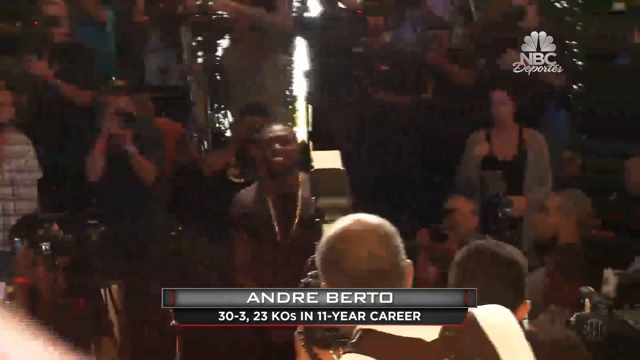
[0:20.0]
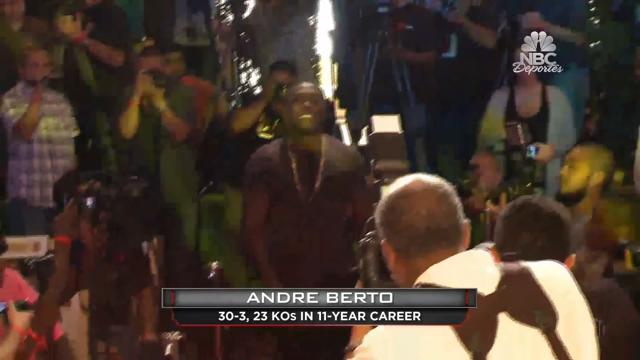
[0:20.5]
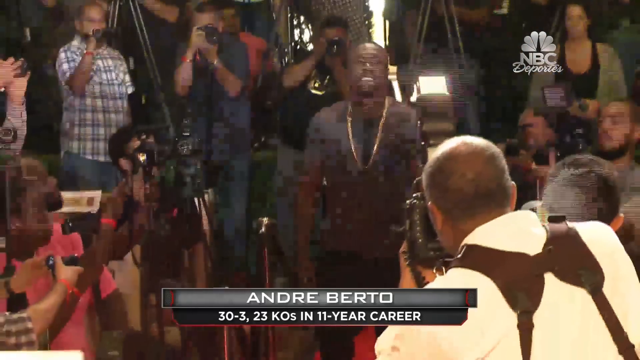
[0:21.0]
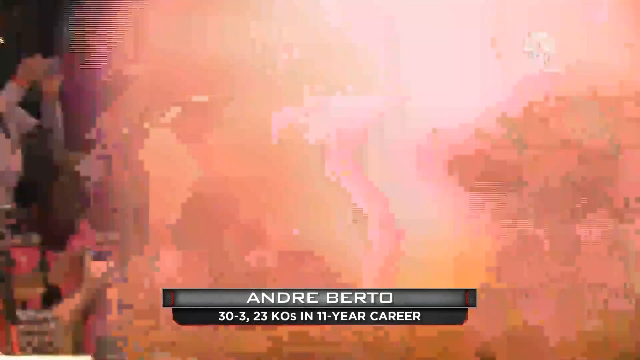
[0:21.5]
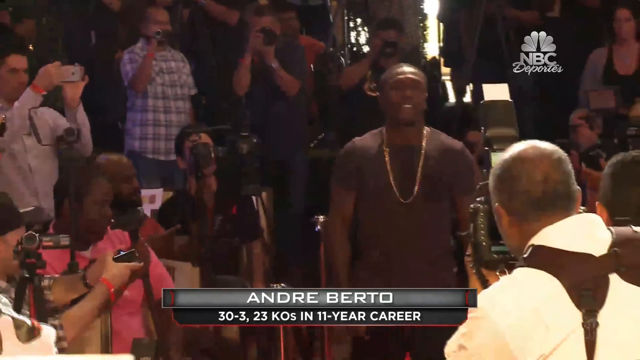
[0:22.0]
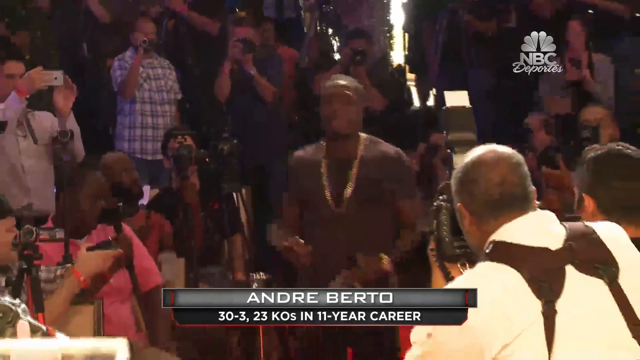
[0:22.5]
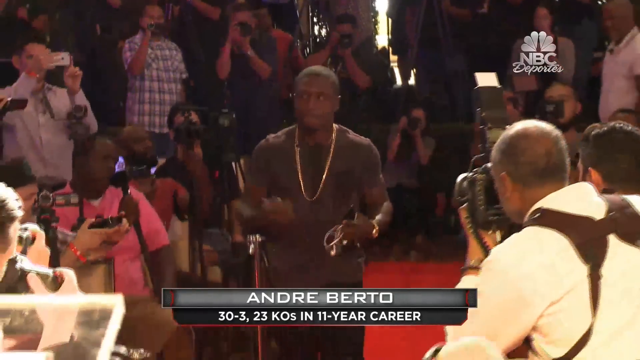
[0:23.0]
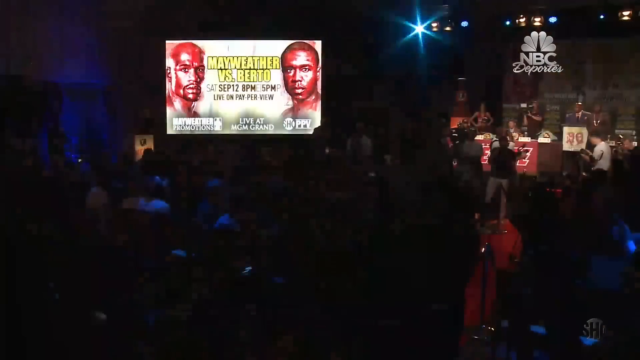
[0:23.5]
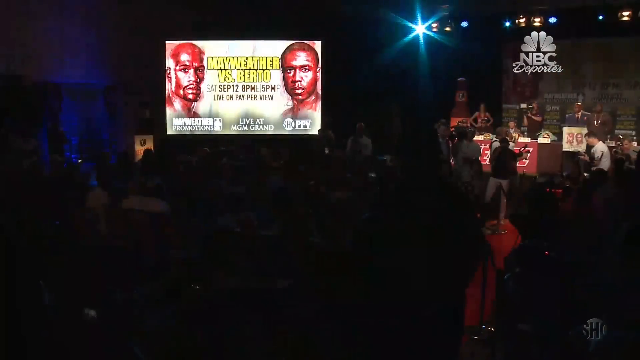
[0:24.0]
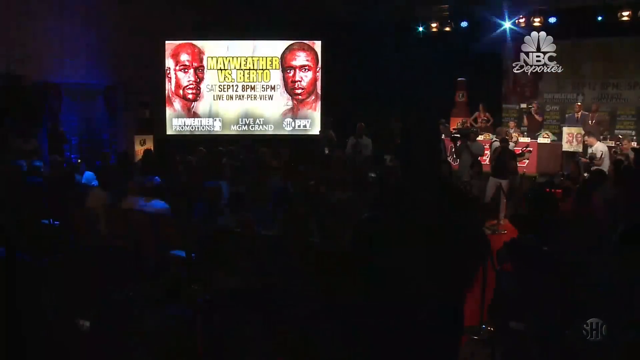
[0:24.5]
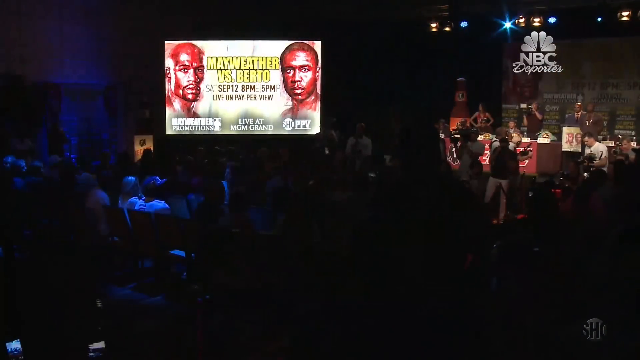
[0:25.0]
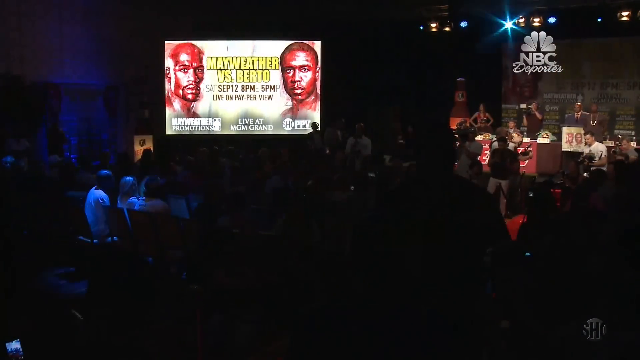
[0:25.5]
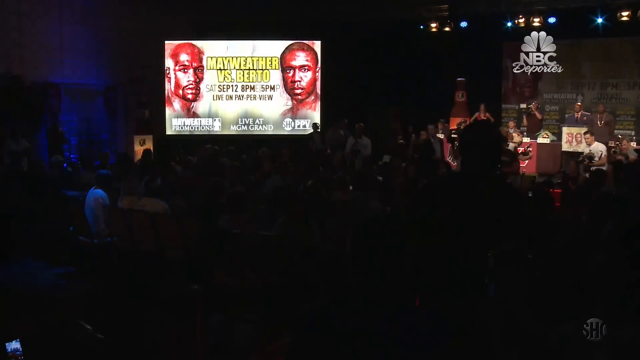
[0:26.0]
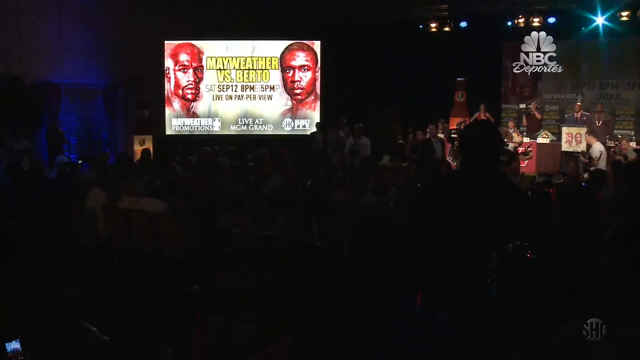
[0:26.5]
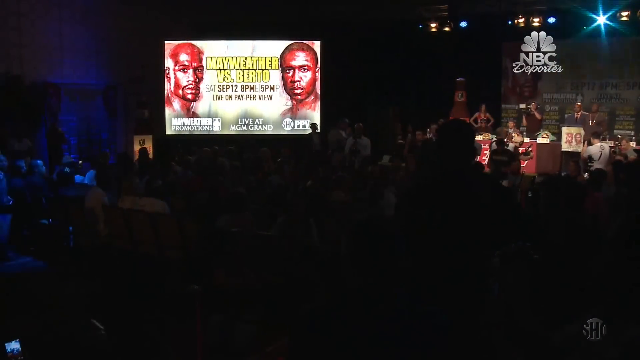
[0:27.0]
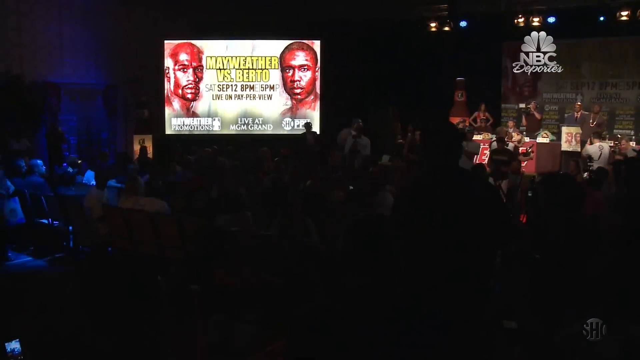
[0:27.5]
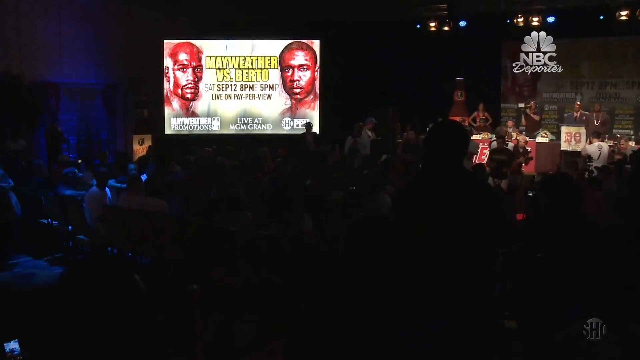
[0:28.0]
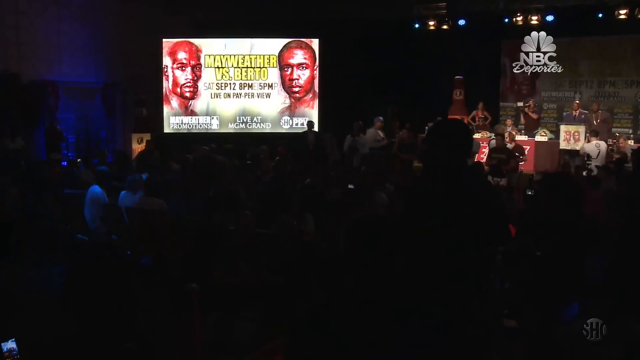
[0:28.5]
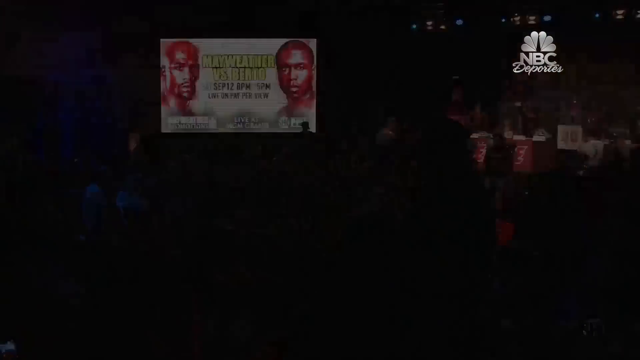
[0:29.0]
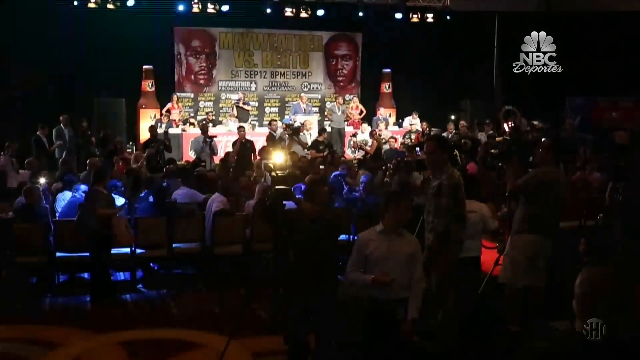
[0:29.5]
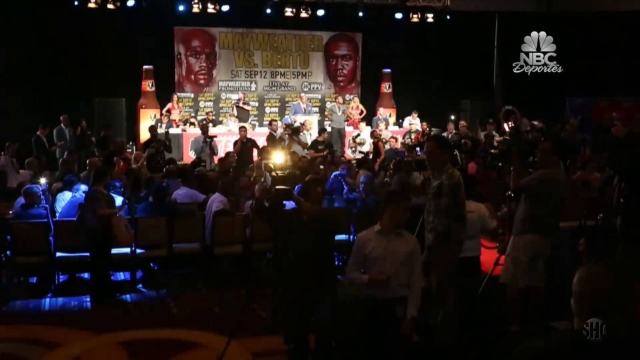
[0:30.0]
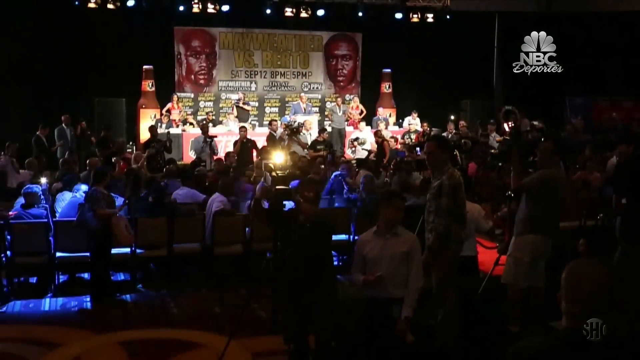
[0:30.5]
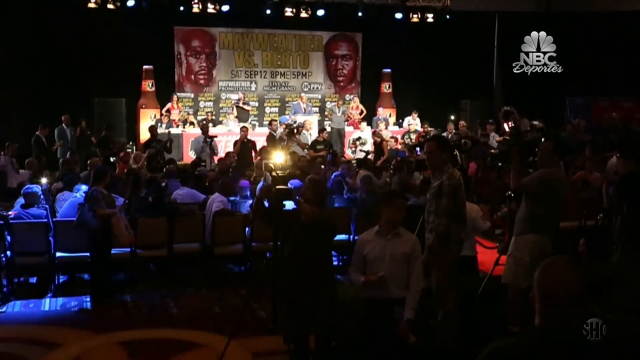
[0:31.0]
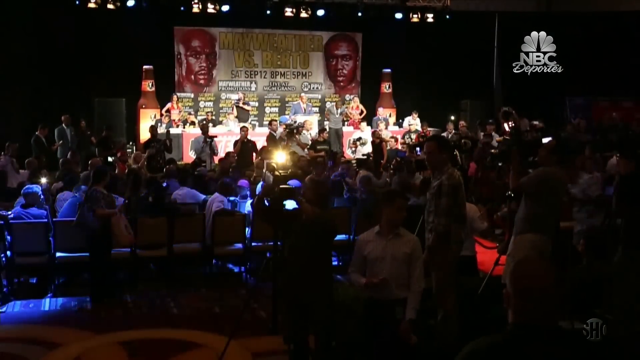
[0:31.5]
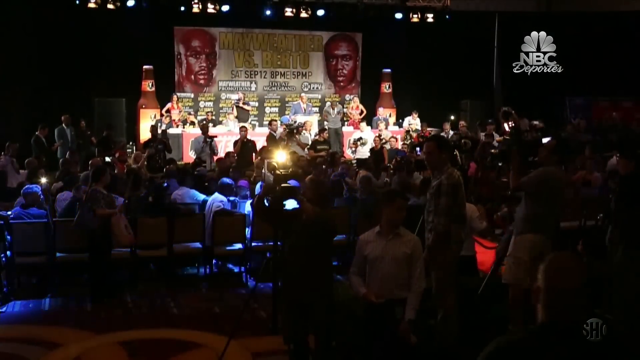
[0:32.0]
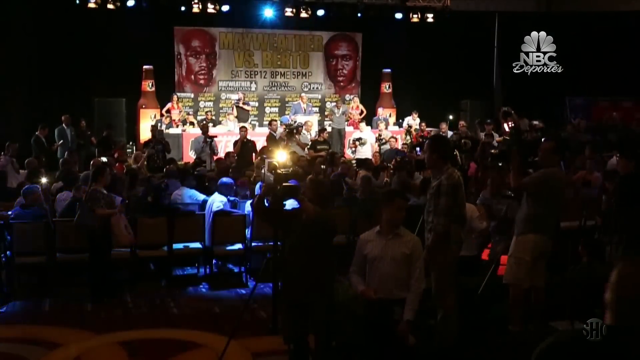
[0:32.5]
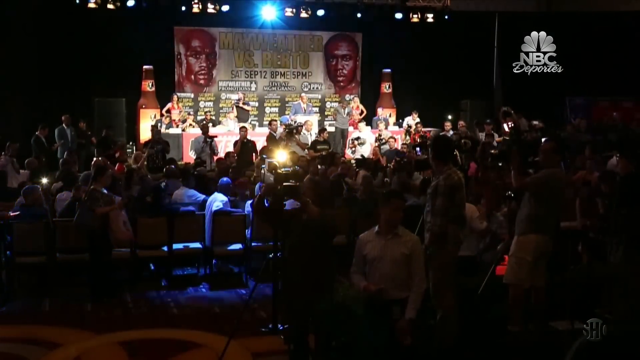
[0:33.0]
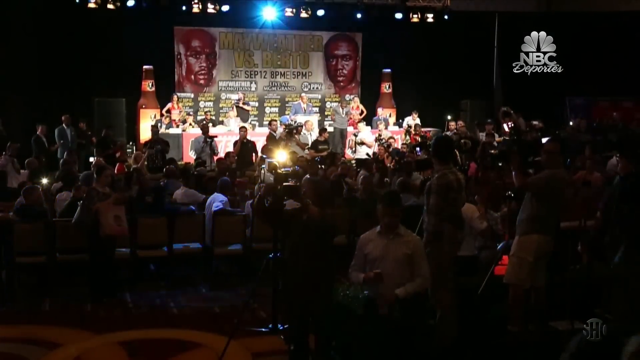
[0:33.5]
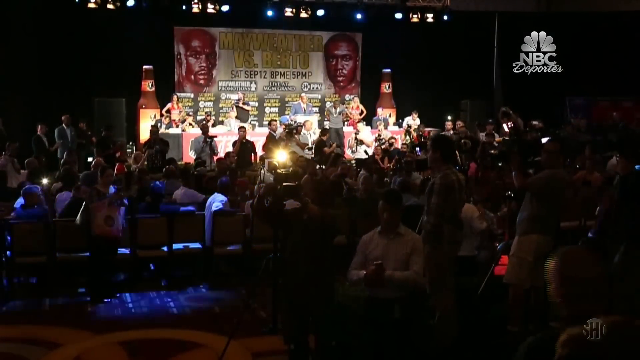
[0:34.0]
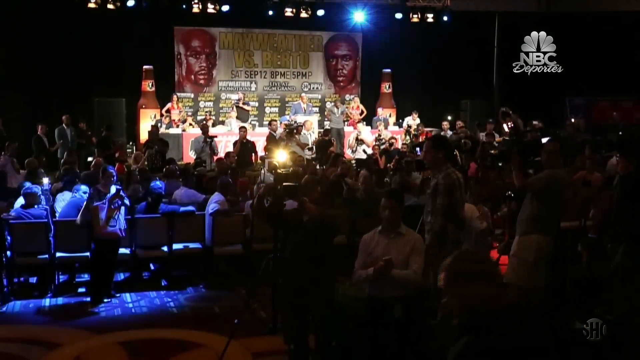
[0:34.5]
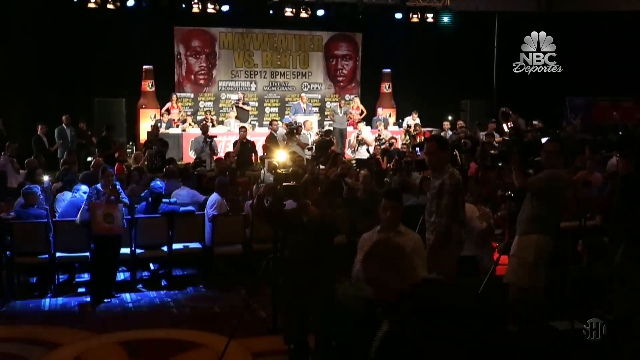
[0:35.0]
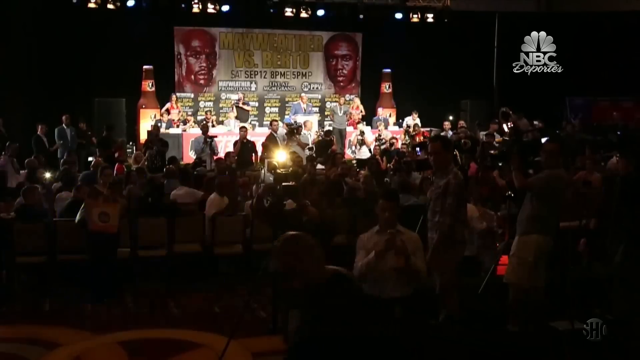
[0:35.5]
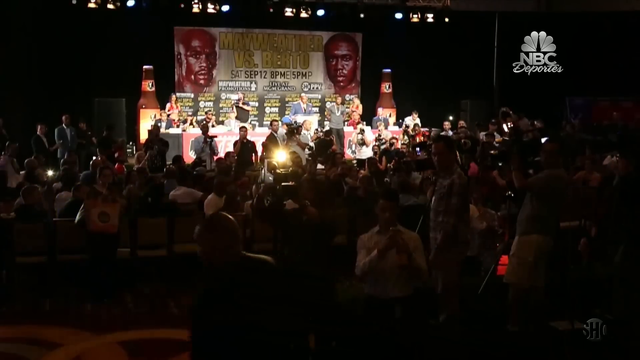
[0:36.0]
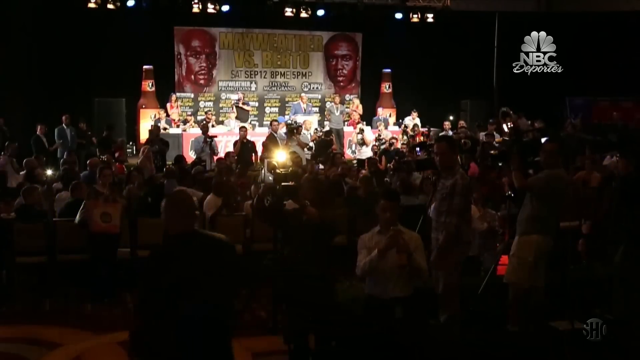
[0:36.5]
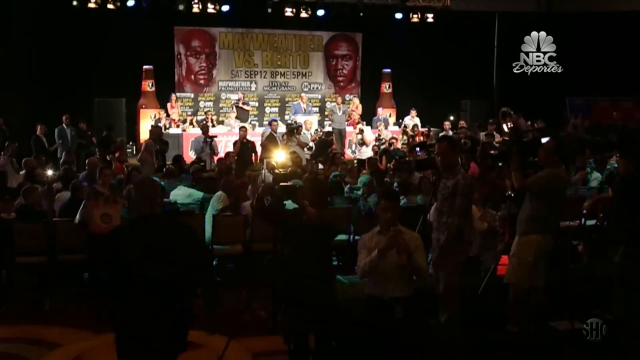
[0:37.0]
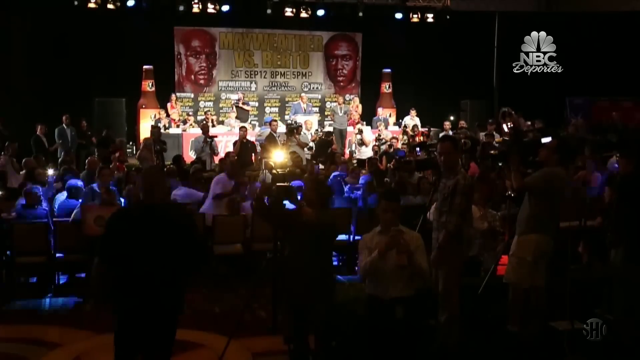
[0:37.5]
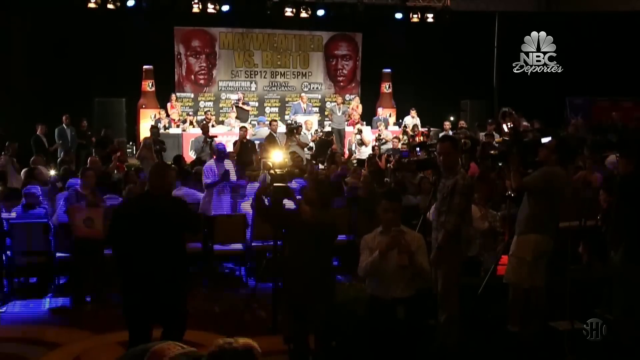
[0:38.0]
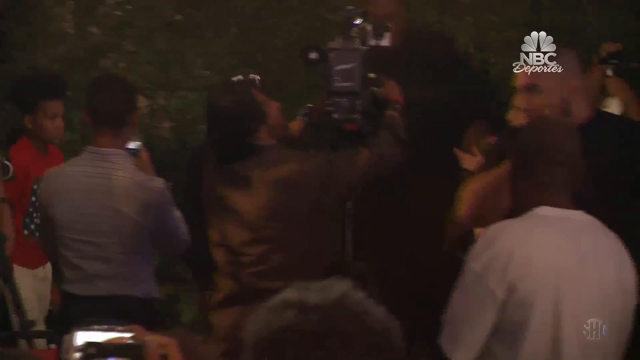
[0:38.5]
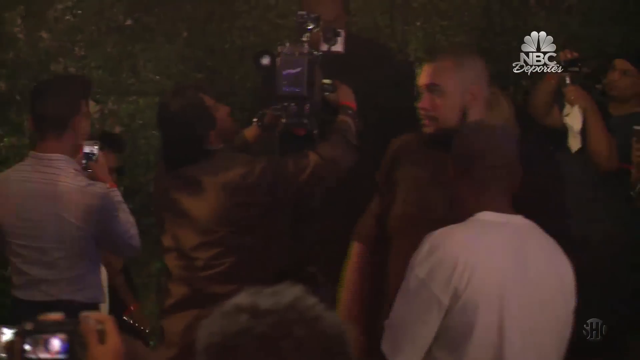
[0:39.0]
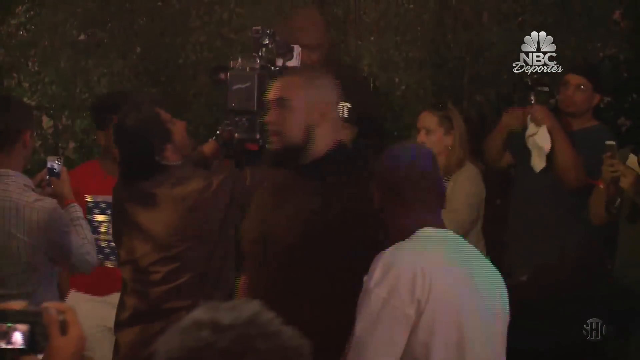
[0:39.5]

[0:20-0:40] A man walks down an aisle, facing the camera, as people take pictures of him. Beneath him, a gray box shows his name, Andre Berto, along with the stats of his boxing career. He raises his right and left hands to his torso so they are in front of him. The view changes: on the left is a screen highlighting the boxing event, and on the right is a lighted stage, with part of the stage more lit up. Another shot follows, apparently taken from within the audience on the right side of the stage, showing the right section of the audience from further back.